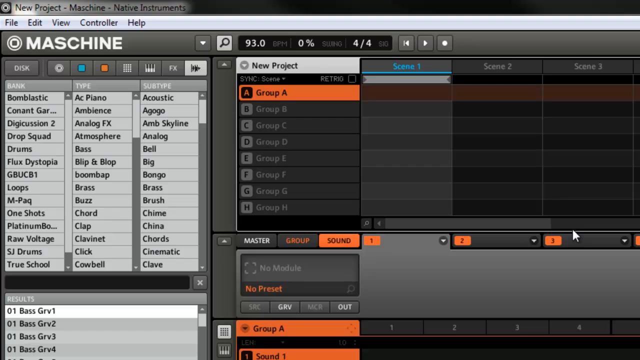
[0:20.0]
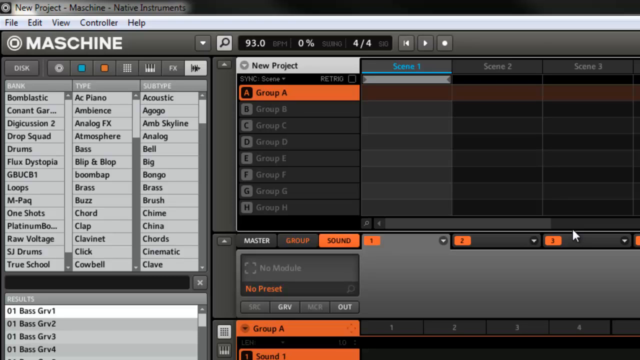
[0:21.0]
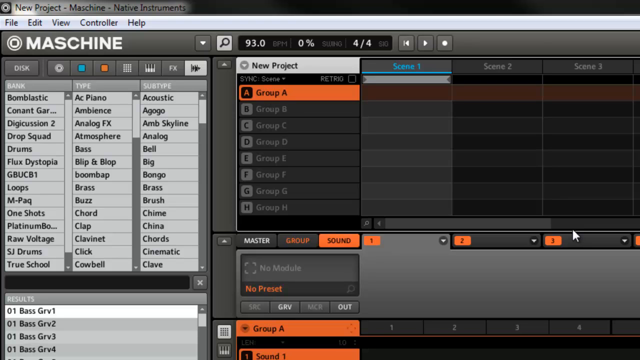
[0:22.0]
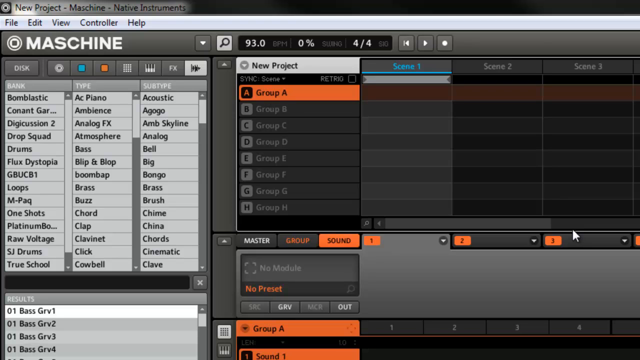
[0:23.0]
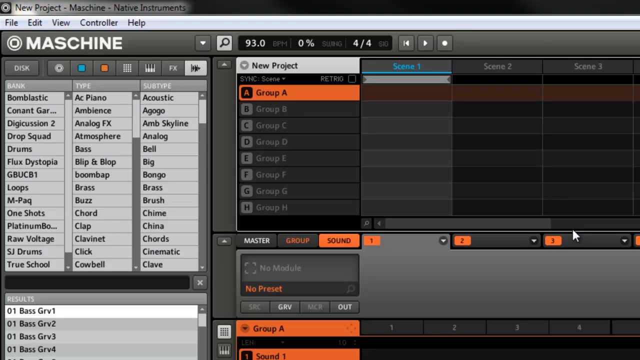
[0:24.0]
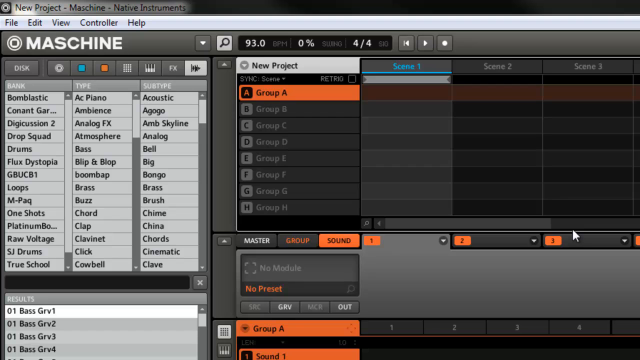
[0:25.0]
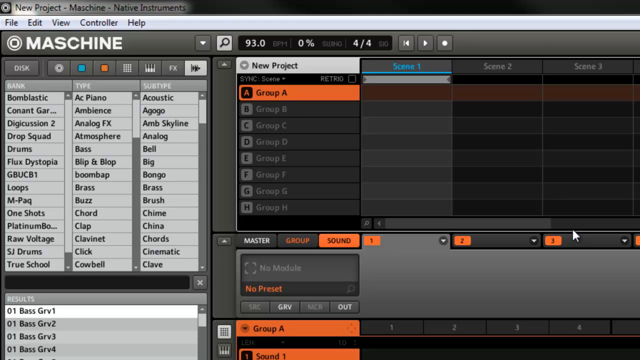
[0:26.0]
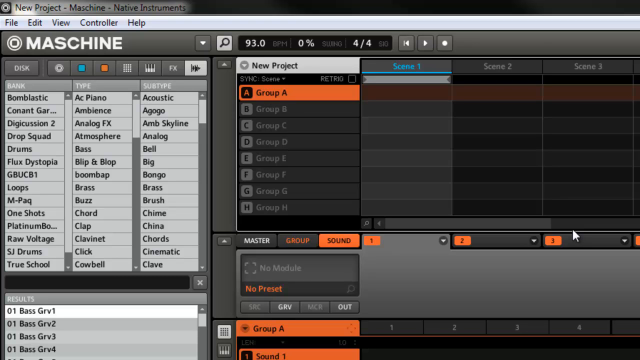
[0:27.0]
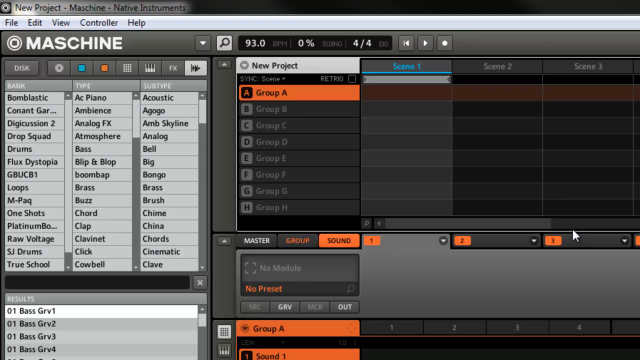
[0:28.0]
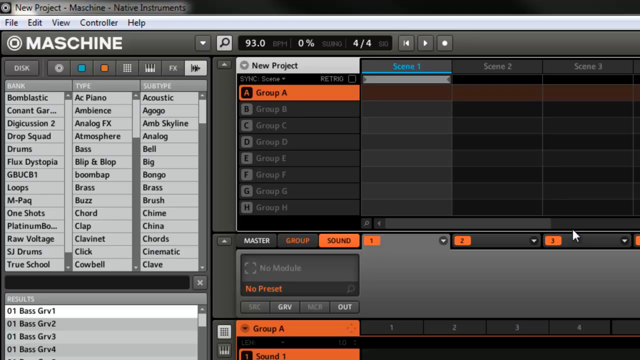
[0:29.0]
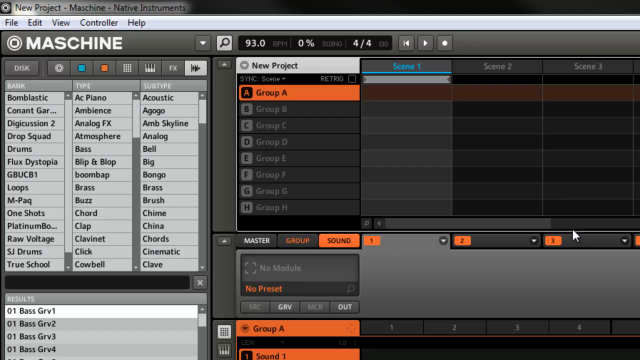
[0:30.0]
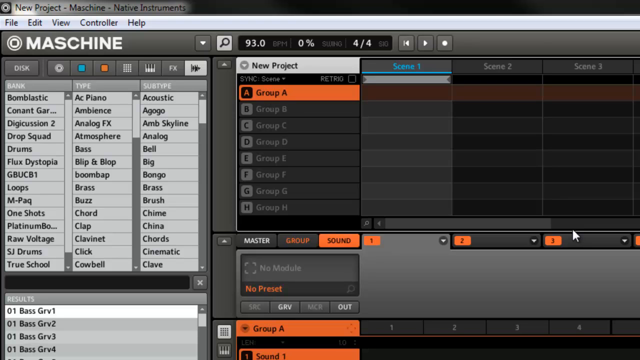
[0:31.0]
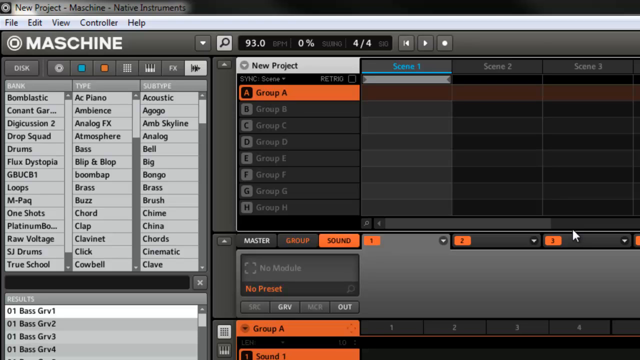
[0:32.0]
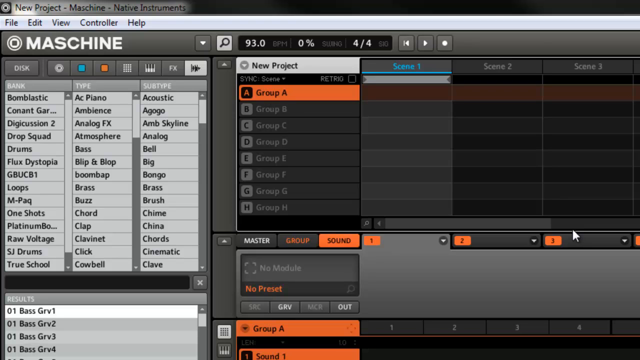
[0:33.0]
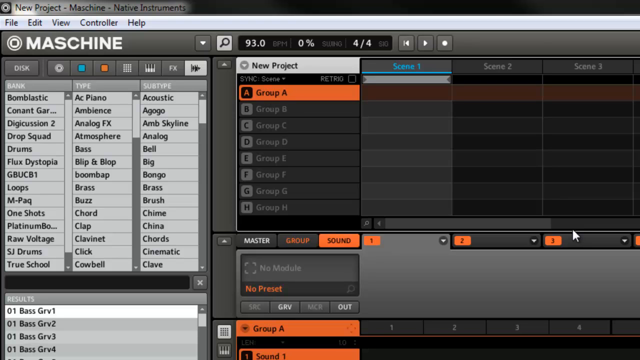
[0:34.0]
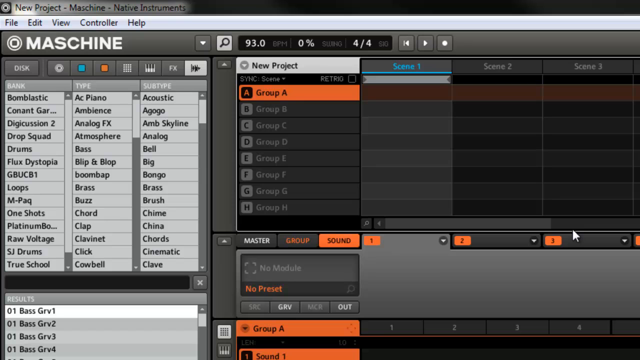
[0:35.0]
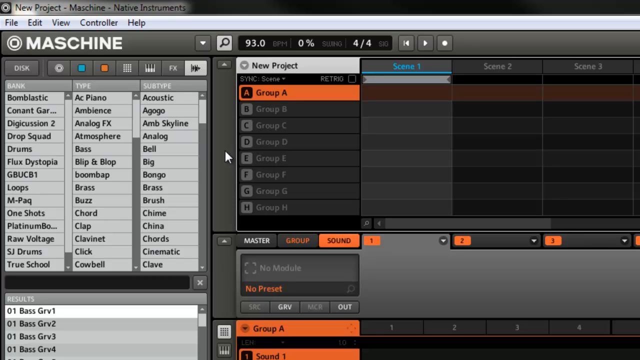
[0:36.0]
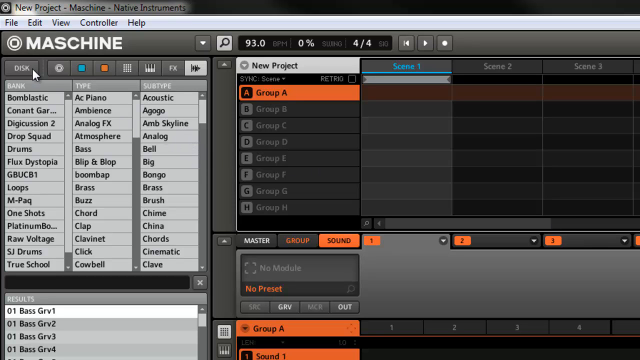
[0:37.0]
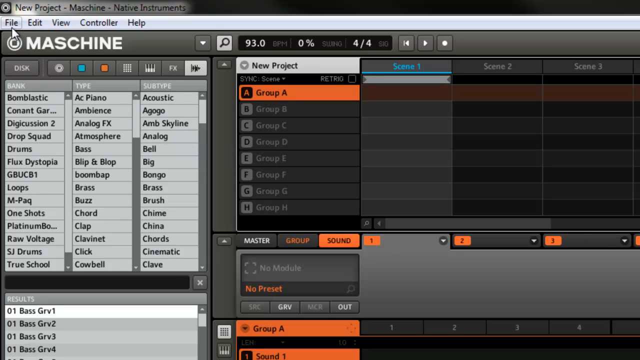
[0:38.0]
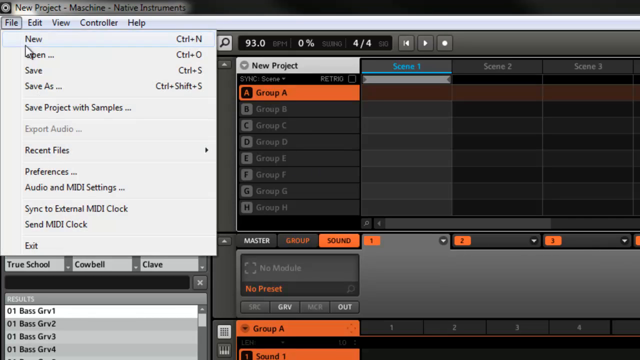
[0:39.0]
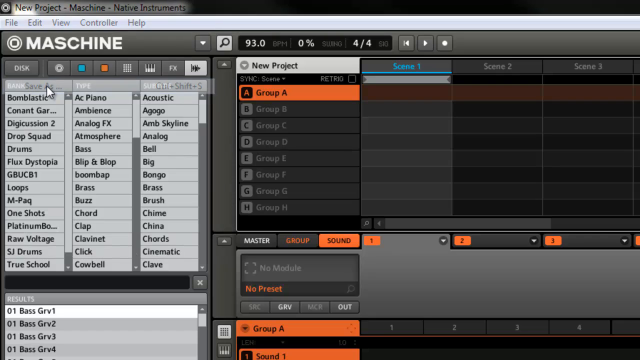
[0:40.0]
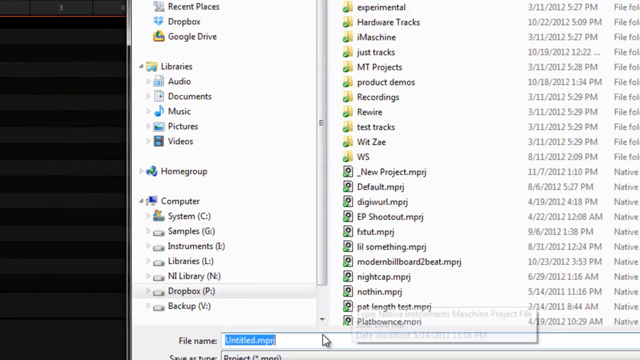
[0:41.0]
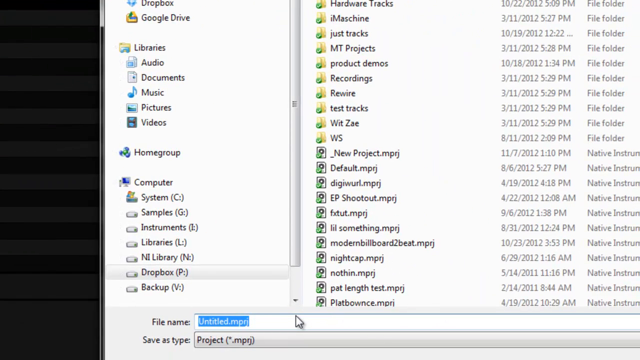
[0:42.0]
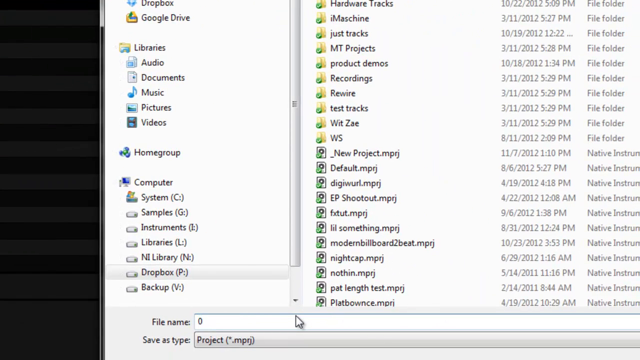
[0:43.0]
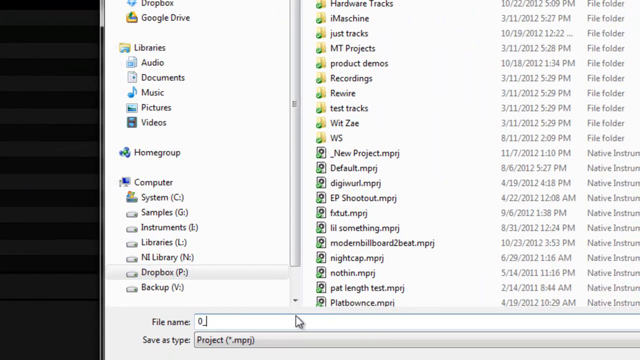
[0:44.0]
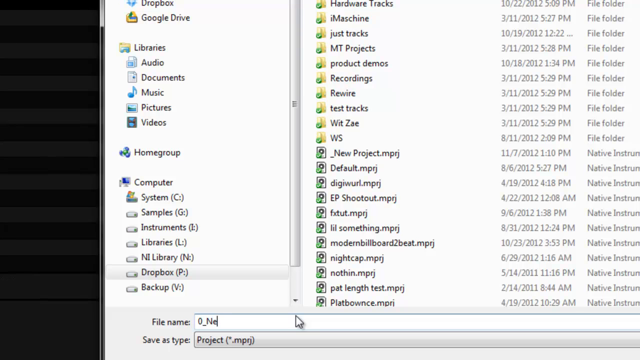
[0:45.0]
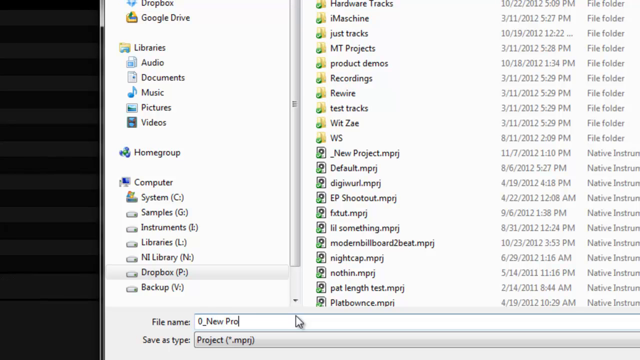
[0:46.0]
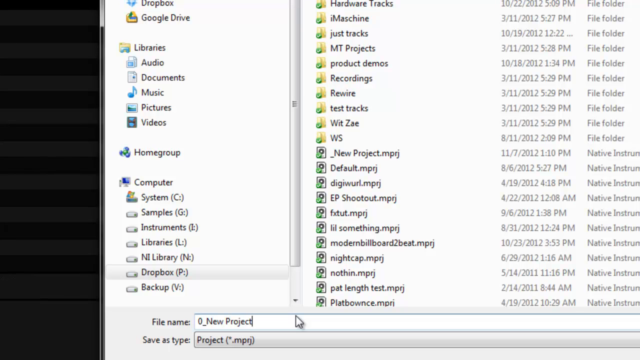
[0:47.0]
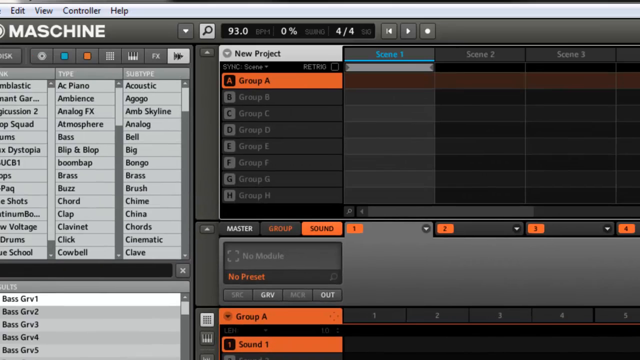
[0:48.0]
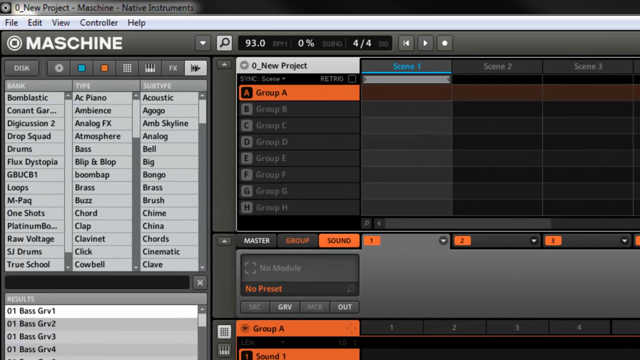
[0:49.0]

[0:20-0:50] The same interface continues to be shown. It has a dark background with orange highlights marking the selected options, and the top option in the spreadsheet is selected with this orange highlight. After a few moments, a mouse starts moving around in the center of the screen. It goes to the top left of the screen, highlights the file option and selects it, opening a drop-down menu below. The mouse selects one of the options, and the camera scrolls down to the bottom right to show a menu: a standard Windows Explorer menu with a sidebar on the left and a list on the right side. The mouse goes to the bottom of the interface and text begins being entered in the box at the bottom. This text is then reflected in the spreadsheet, above the top of the far-left column.